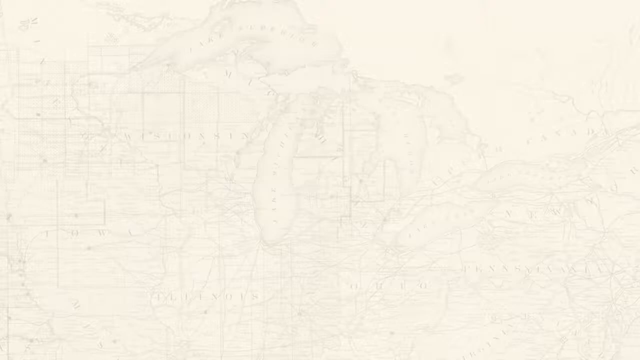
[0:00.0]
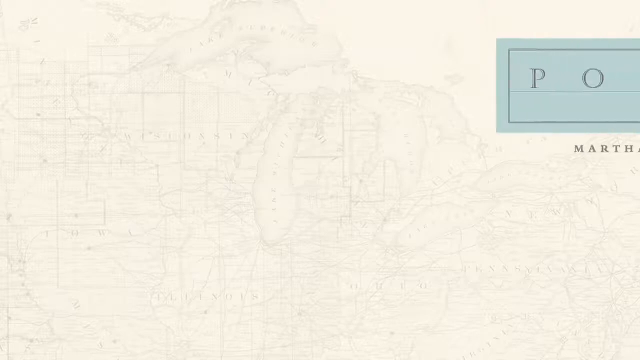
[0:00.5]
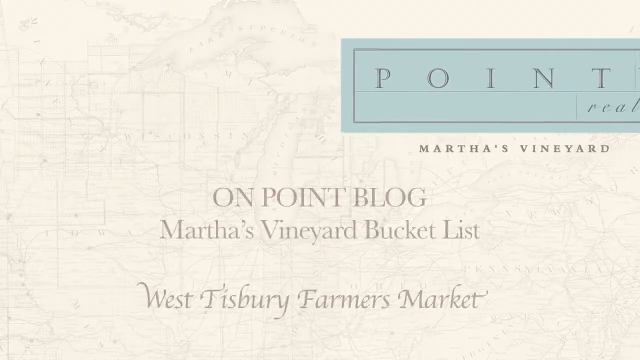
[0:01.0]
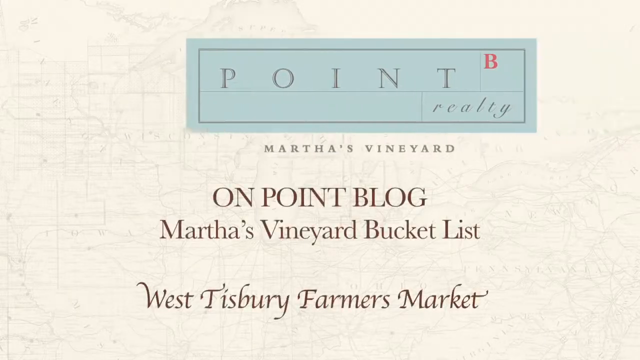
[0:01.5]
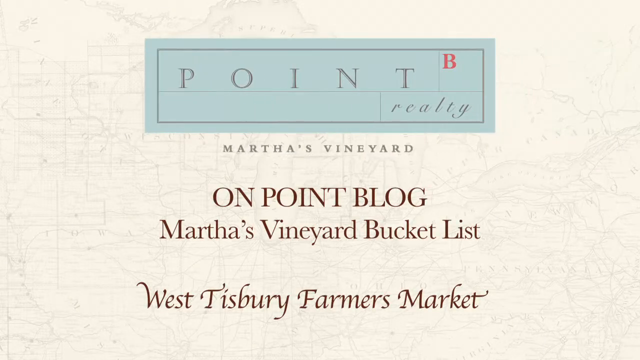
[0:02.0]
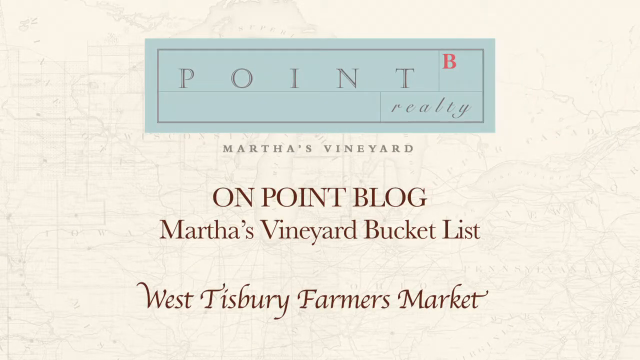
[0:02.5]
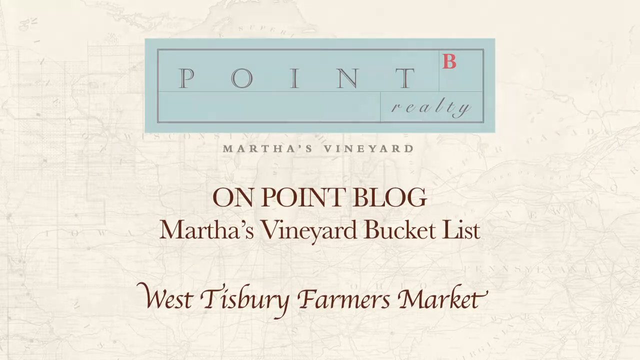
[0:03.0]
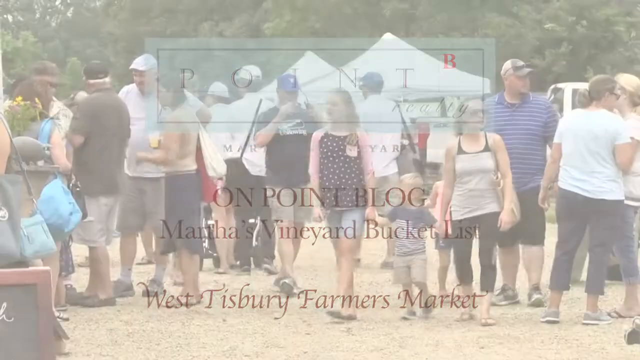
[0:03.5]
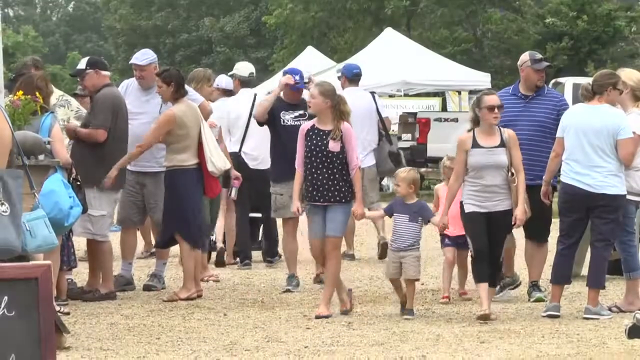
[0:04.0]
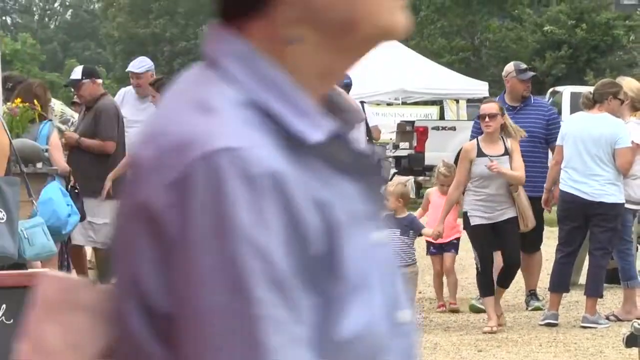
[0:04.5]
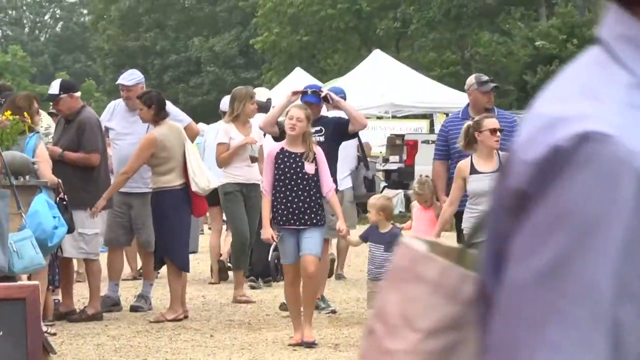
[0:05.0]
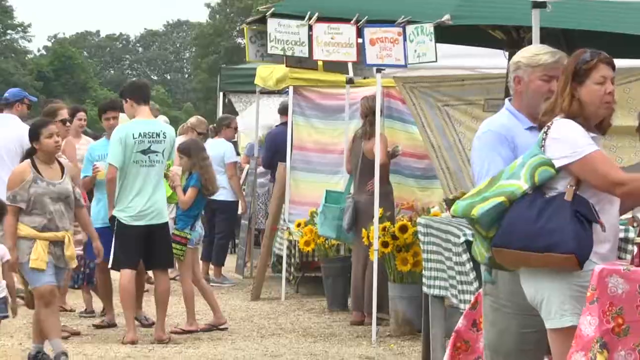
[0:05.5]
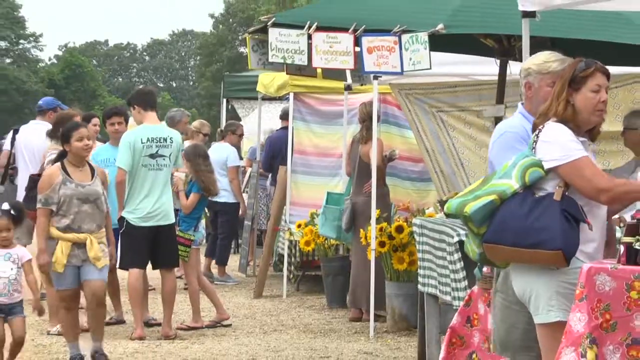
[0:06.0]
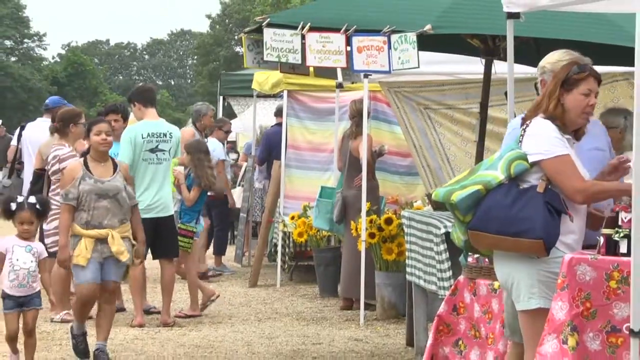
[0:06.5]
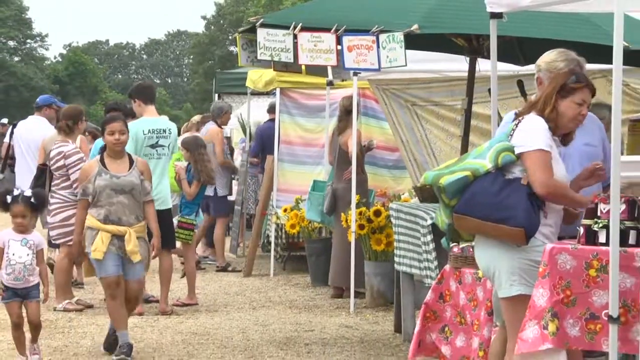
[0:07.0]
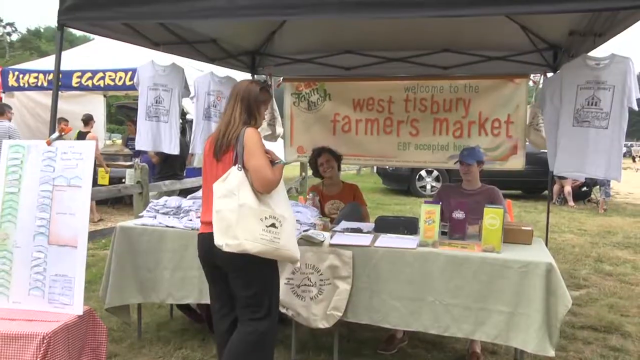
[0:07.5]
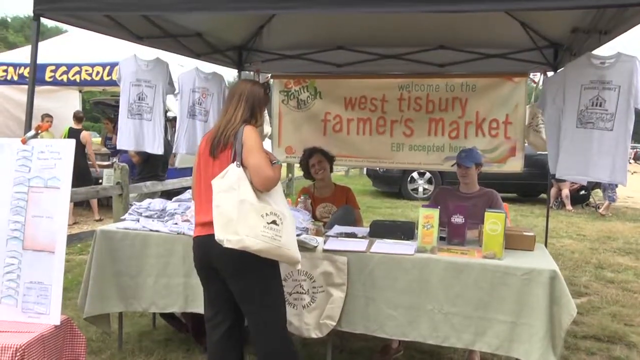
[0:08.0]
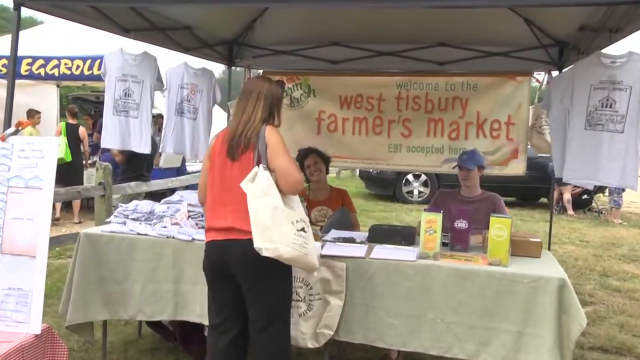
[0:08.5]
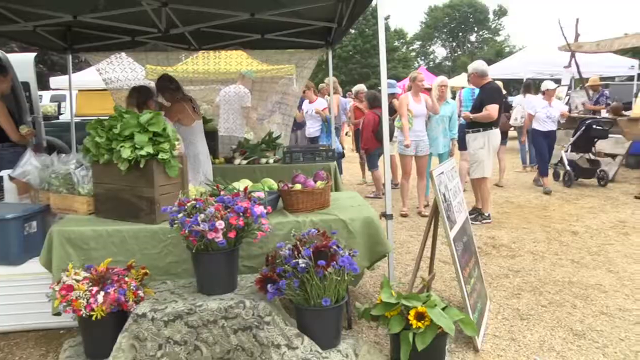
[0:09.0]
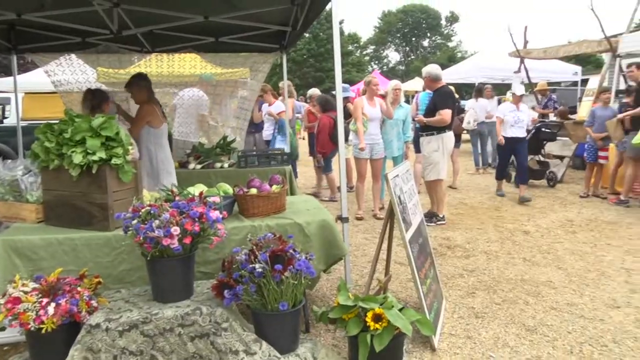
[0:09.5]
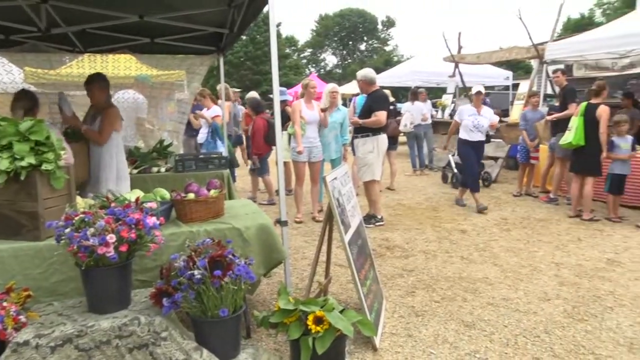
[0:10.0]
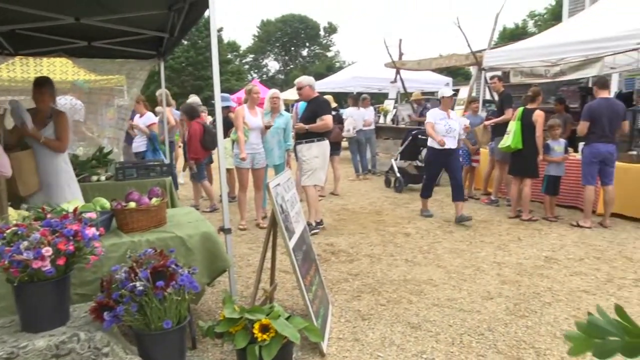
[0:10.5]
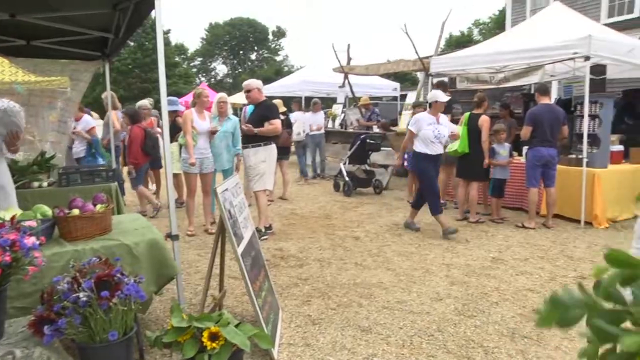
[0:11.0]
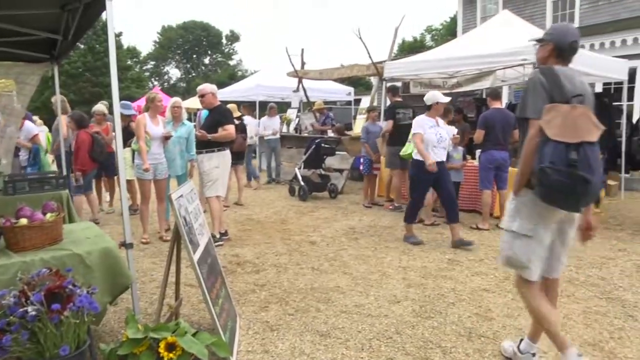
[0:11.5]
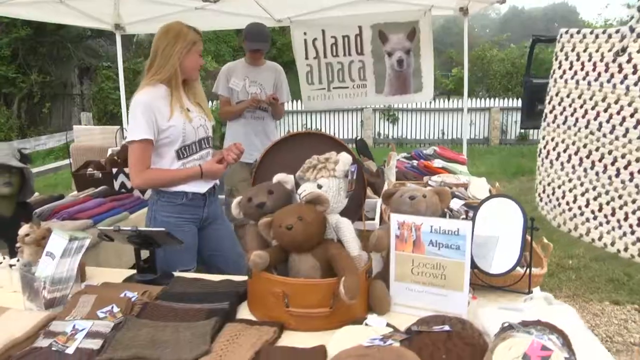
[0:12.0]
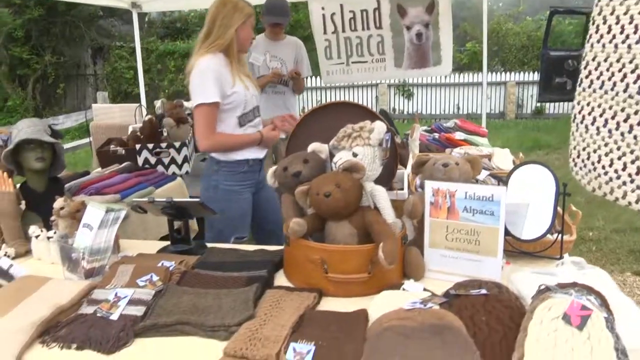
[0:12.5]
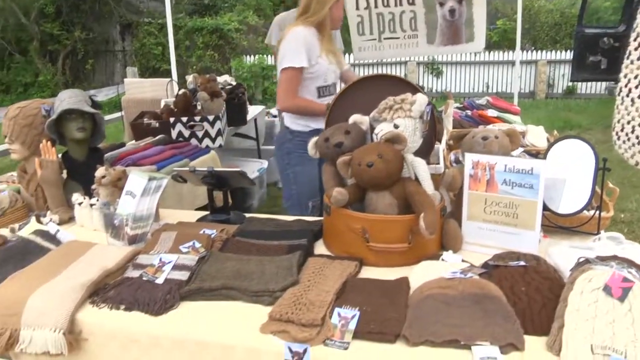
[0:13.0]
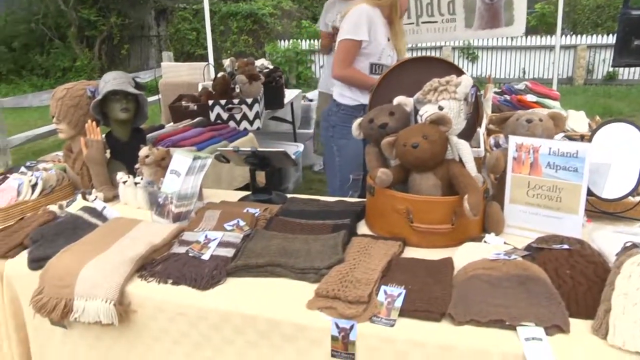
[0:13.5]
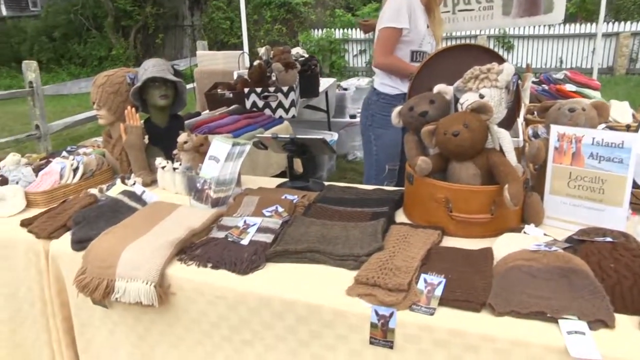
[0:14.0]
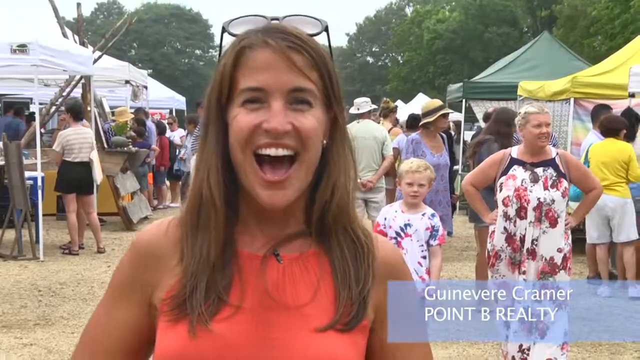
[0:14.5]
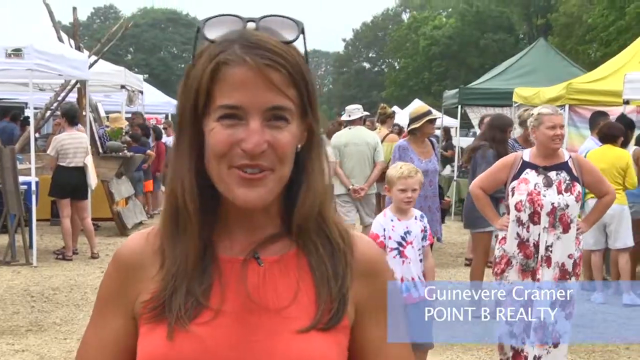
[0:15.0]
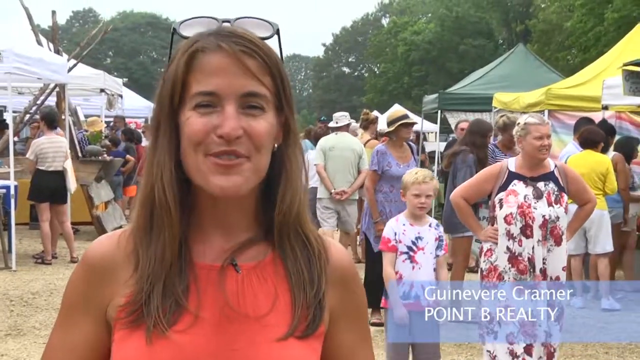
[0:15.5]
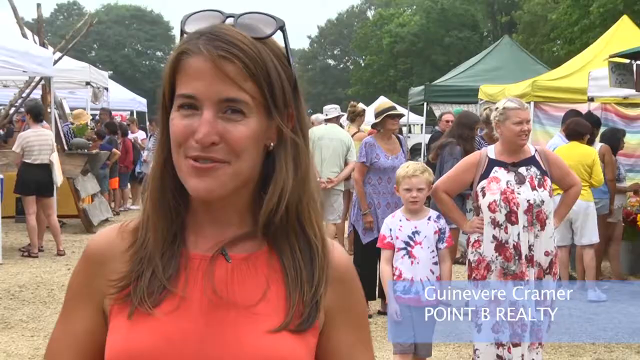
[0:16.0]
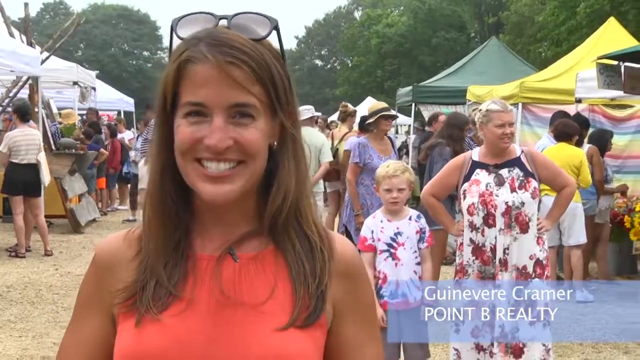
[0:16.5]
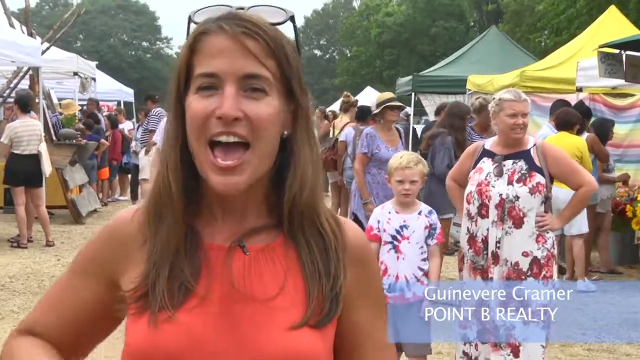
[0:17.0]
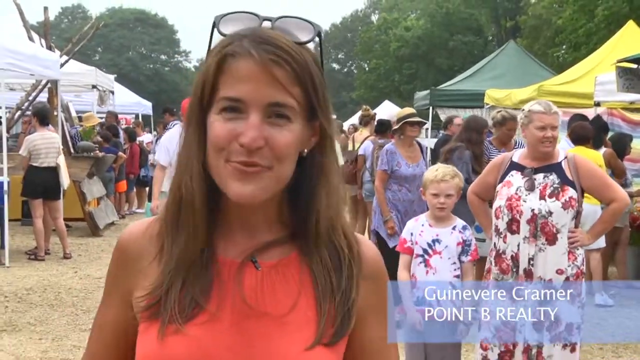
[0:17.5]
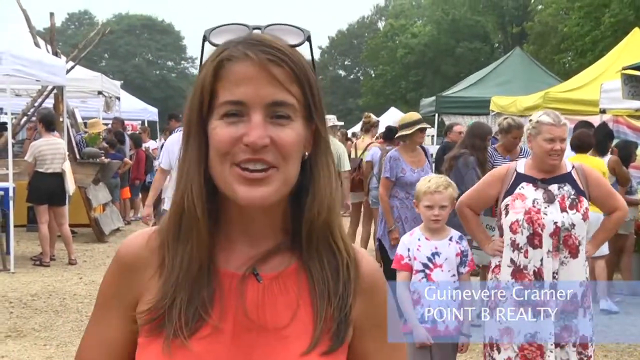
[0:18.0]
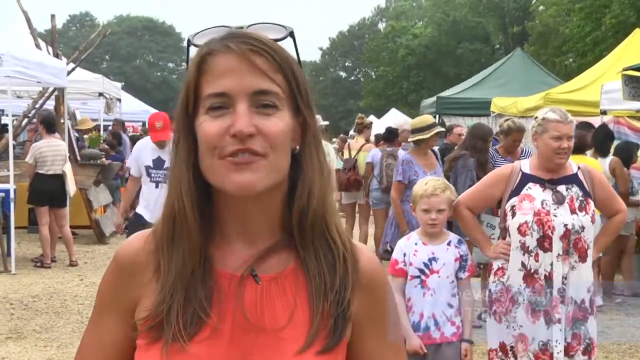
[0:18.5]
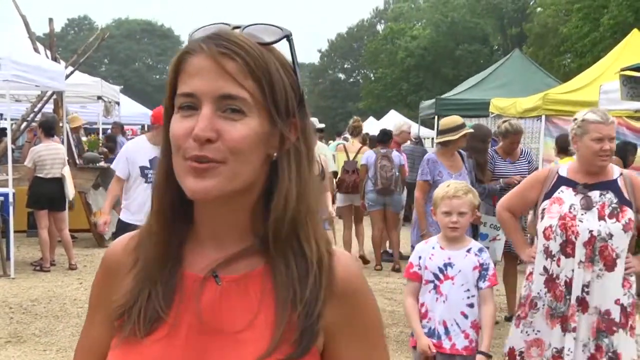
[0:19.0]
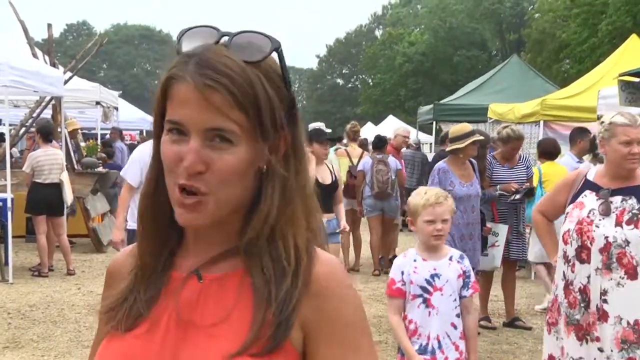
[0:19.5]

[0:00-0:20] The video opens with writing that includes "Martha's Vineyard," and text reading "Martha's Vineyard bucket list, West Tisbury Farmers Market." It cuts to people of all ages, from young children to adults, mothers and elderly gentlemen, walking on a grass area. Many people then walk around and look at various stalls, apparently at the West Tisbury farmers market, where various items are for sale. Sunflowers can be seen at one stall. A stall has various flowers for sale in purple, red and pink, along with some fruits. The video cuts to another stall with hats, scarves and teddy bears on show, with Island Alpaca, locally grown. Genevieve Kramer from Point V Realty then speaks to the camera, with various people and stalls in the background.